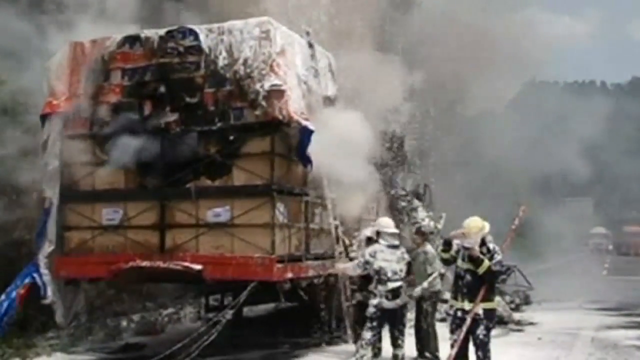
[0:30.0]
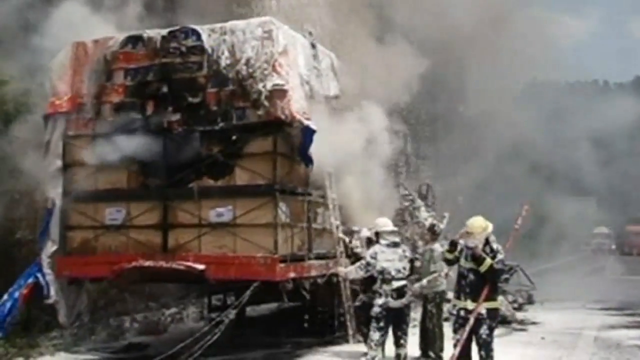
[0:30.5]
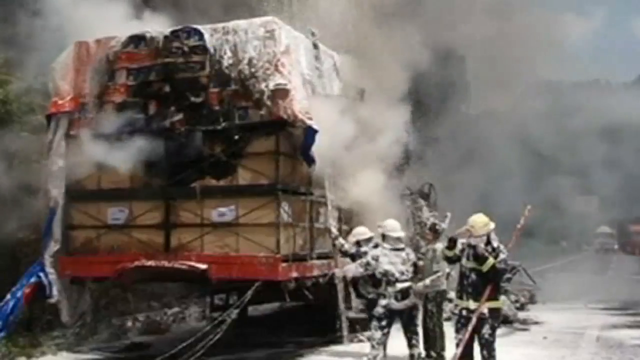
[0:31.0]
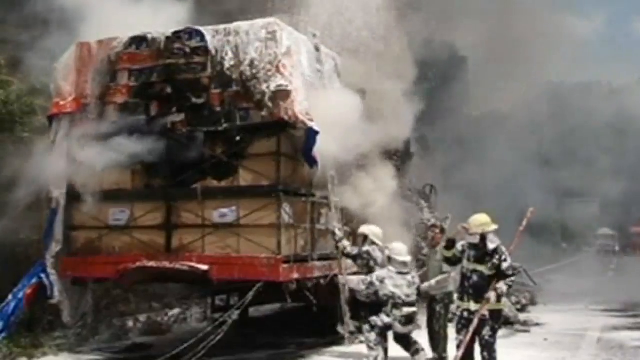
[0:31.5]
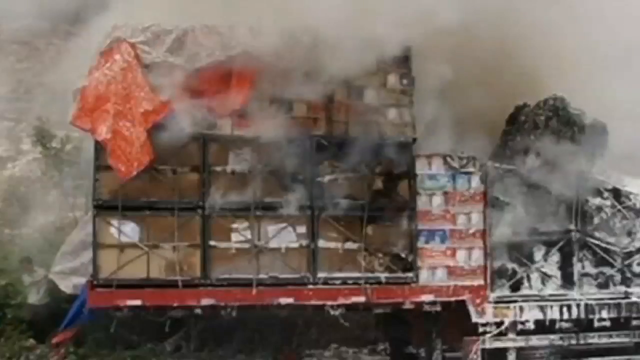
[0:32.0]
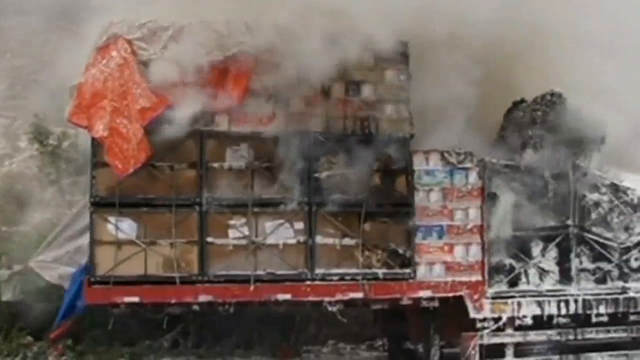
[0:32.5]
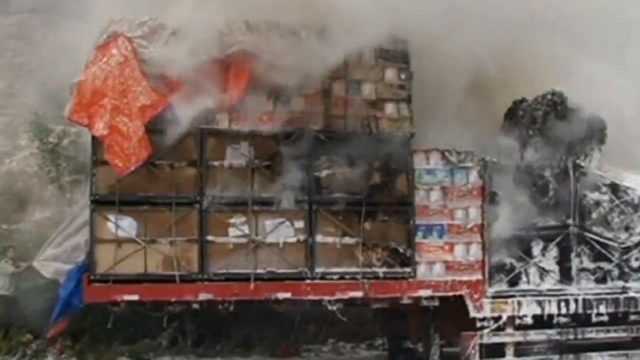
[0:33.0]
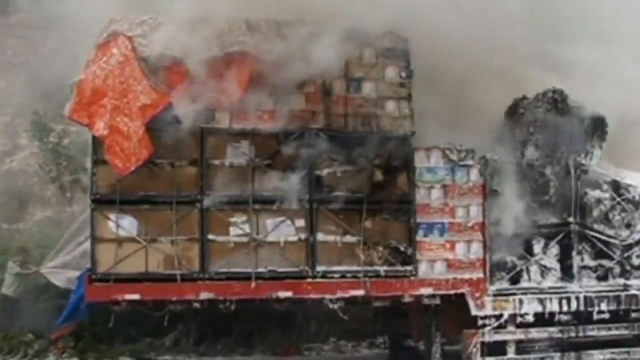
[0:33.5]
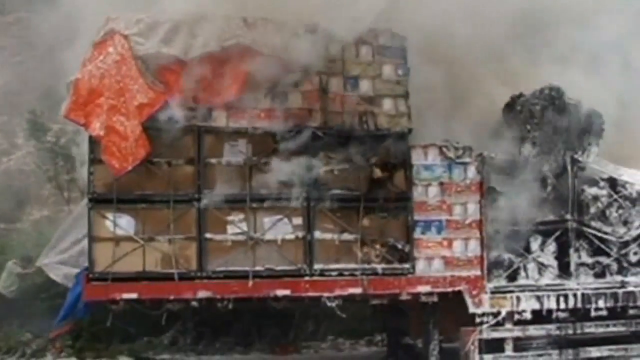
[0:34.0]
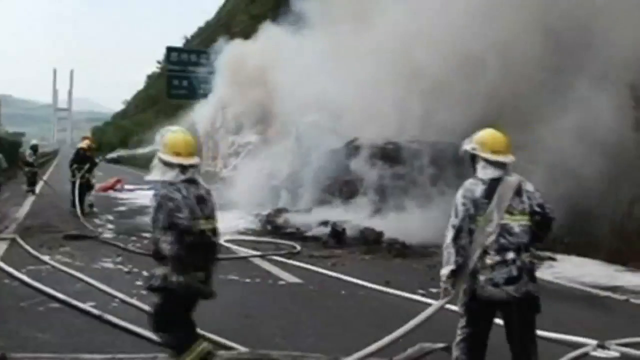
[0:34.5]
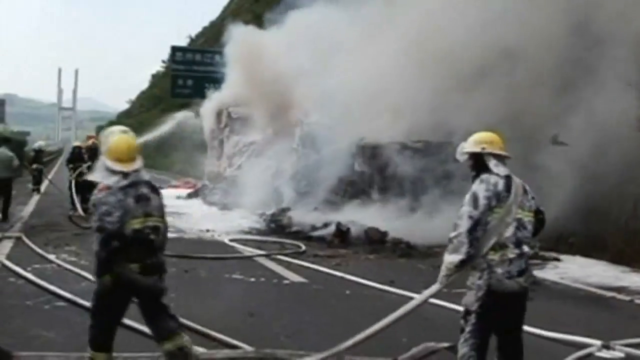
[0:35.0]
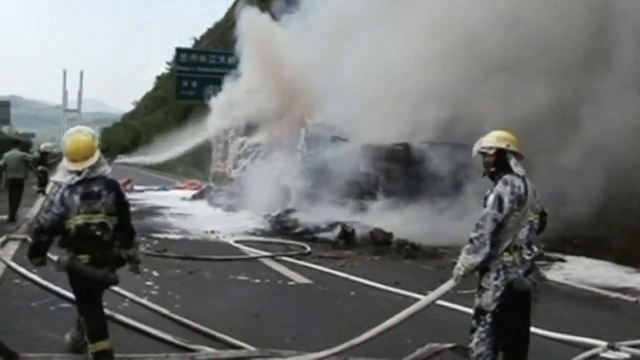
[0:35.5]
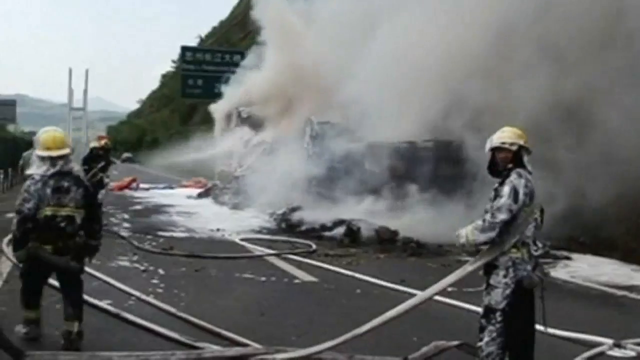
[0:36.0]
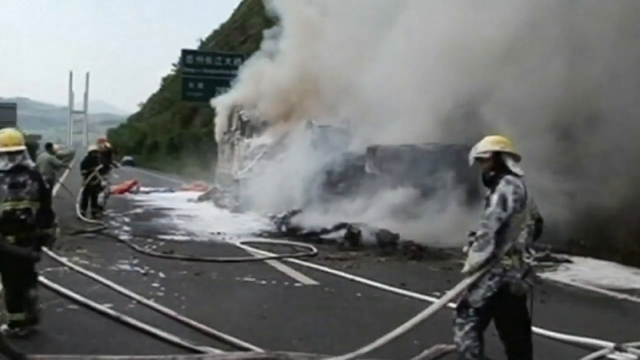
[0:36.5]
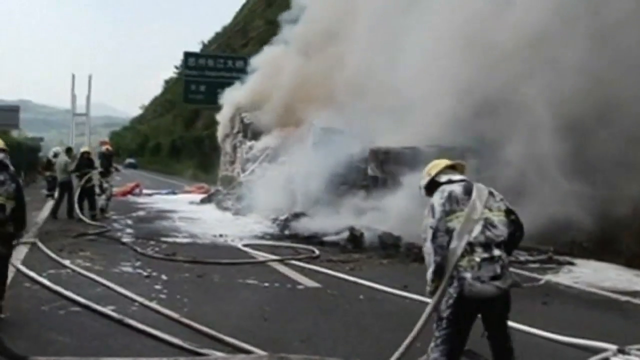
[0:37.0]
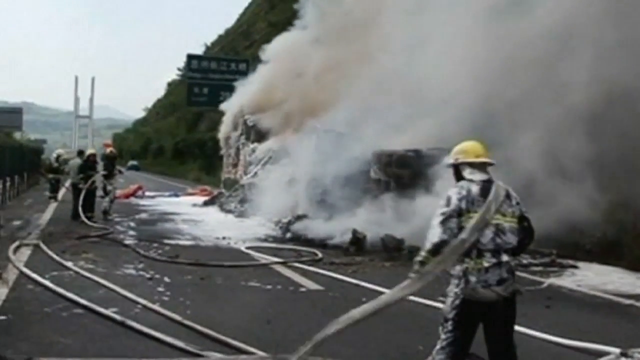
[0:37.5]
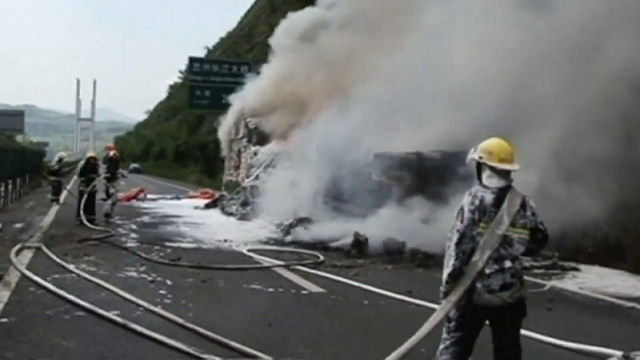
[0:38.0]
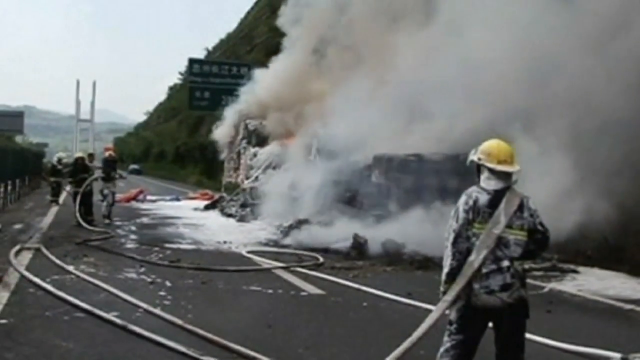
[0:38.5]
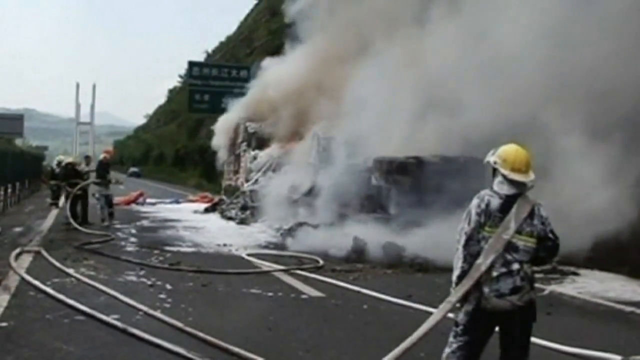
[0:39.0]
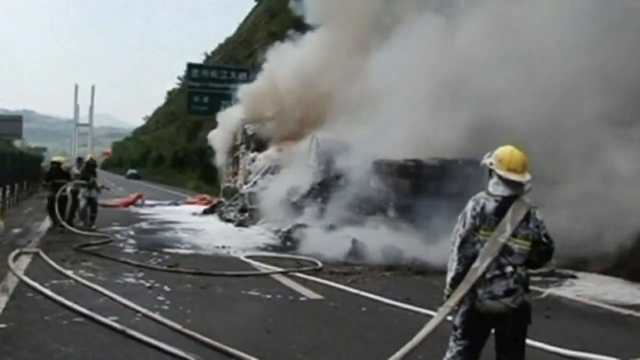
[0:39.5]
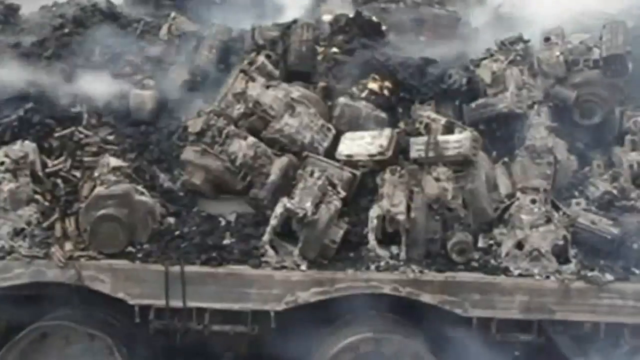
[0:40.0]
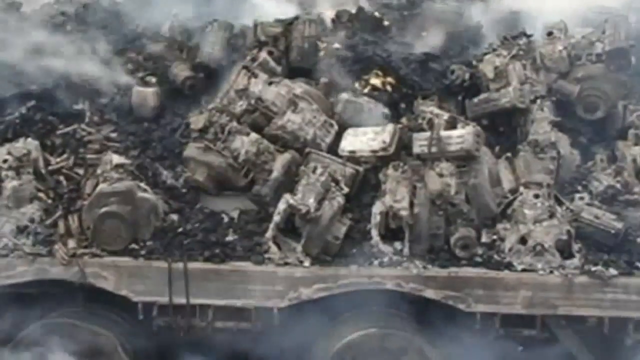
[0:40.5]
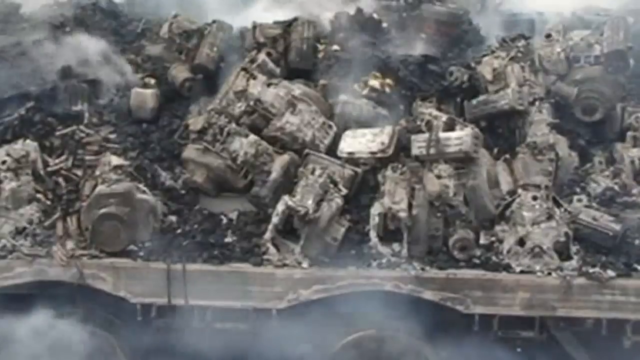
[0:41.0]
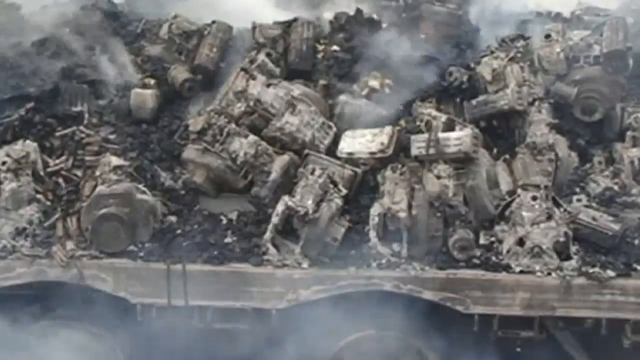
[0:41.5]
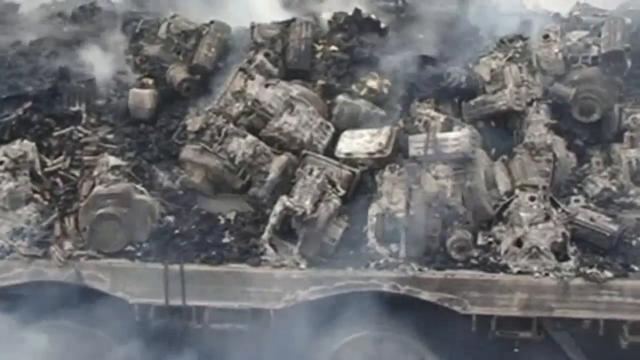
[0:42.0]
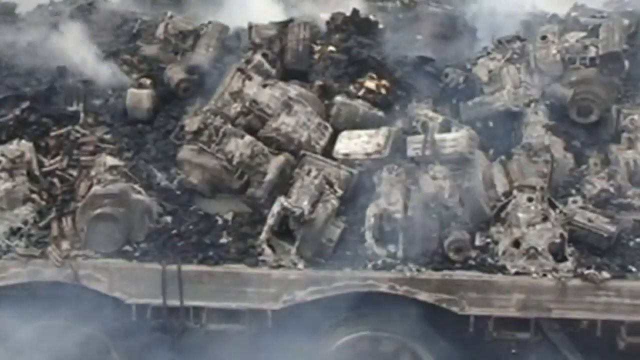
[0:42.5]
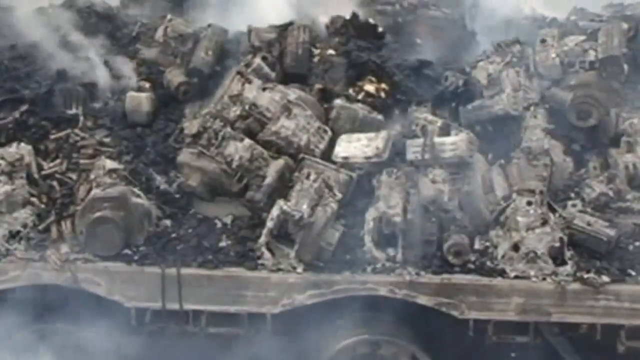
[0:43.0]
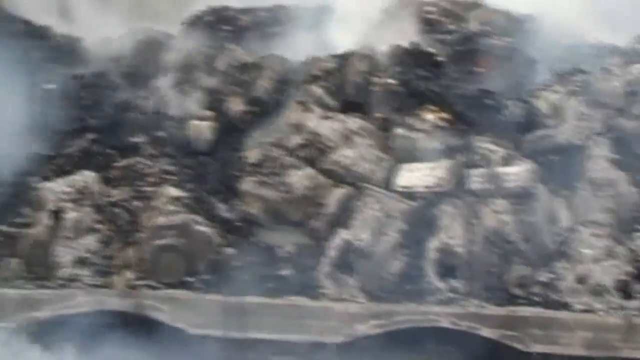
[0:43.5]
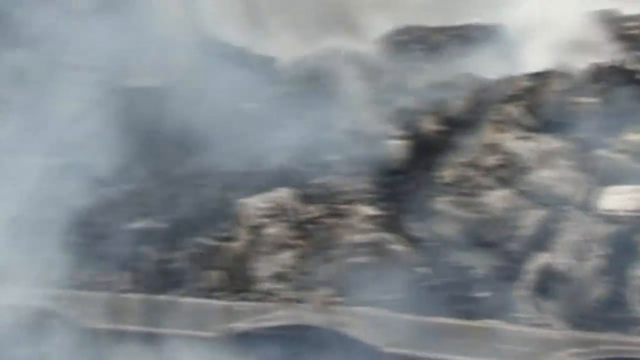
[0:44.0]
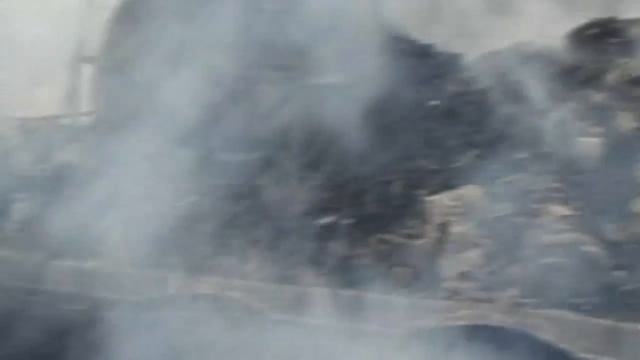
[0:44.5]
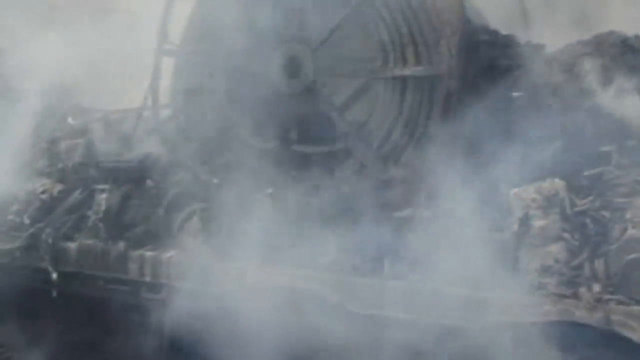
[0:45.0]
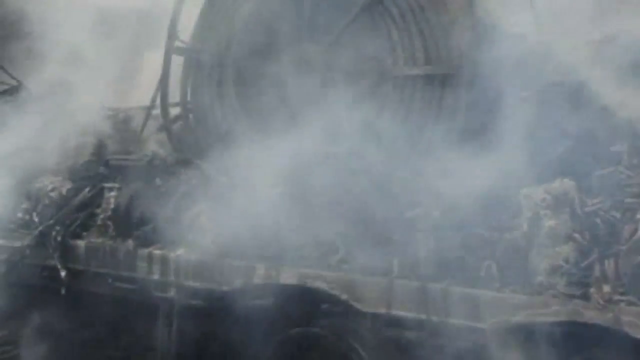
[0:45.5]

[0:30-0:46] They hold up the ladder to the top of the truck, and someone starts to grab on and hold it. The camera switches to another angle on the back of the truck, showing the boxes and other materials on the back of it engulfed in smoke. In the bottom left of the screen, someone tries to move a tarp at the bottom of the truck. Another angle shows the whole thing engulfed in smoke from a little farther away, with the road continuing down the street in view; firemen hold hoses looking toward the scene and walk across the camera. The camera then switches to a burnt area with a bunch of remnants from the flames, all smoking, and pans to the left to show more of it and the damage done by the fire. The camera stops at the left side of the area as the video ends.